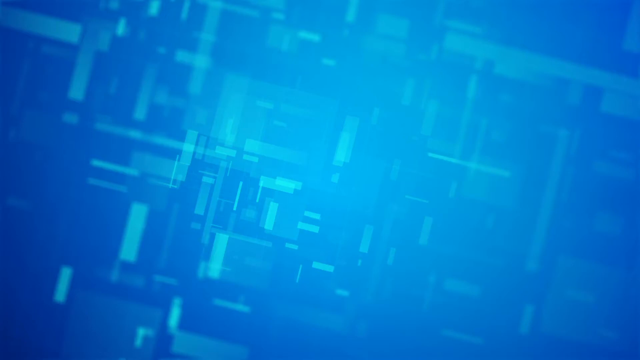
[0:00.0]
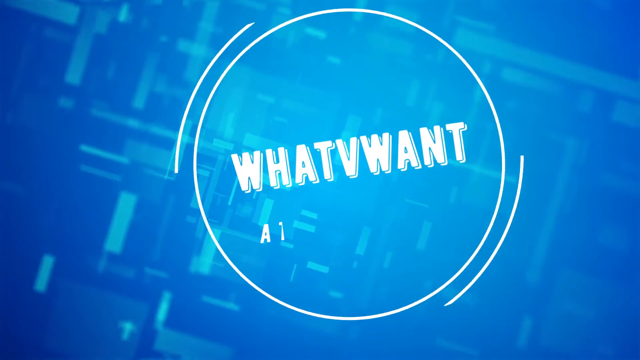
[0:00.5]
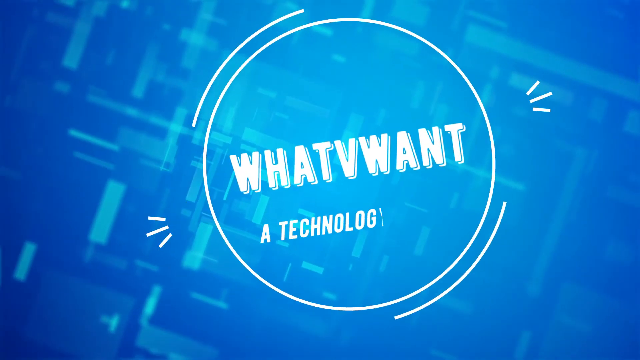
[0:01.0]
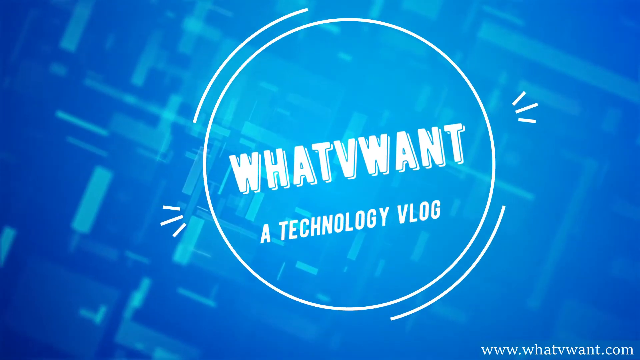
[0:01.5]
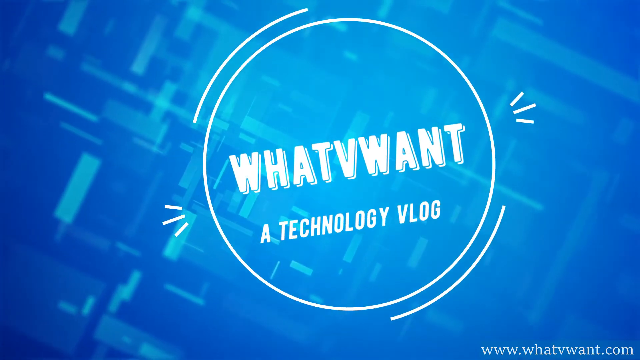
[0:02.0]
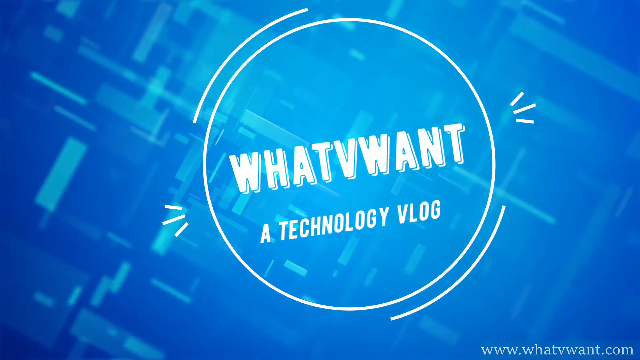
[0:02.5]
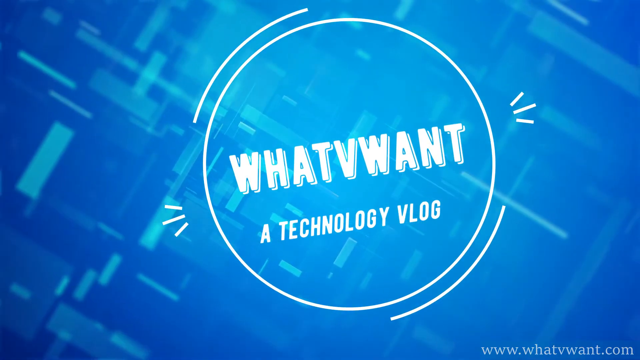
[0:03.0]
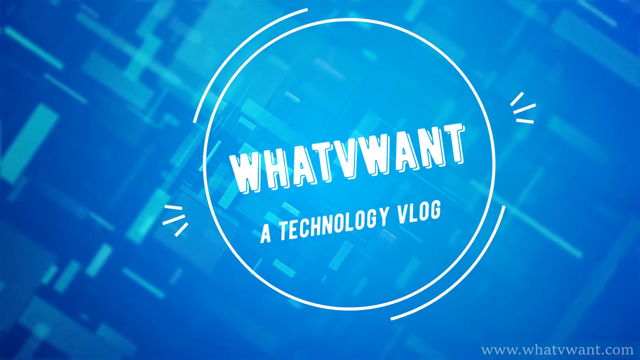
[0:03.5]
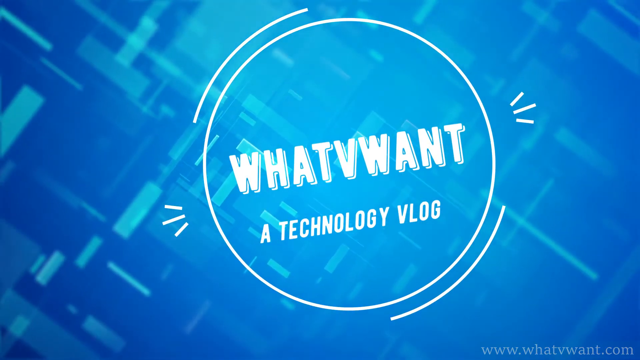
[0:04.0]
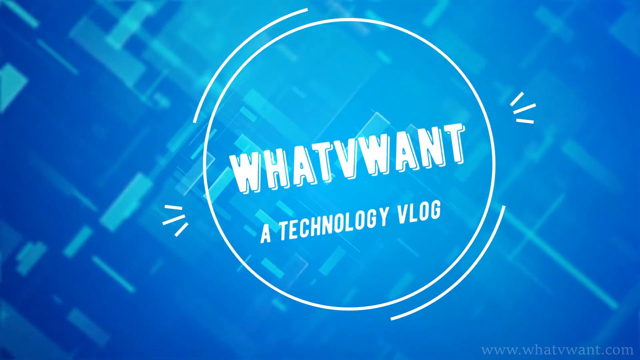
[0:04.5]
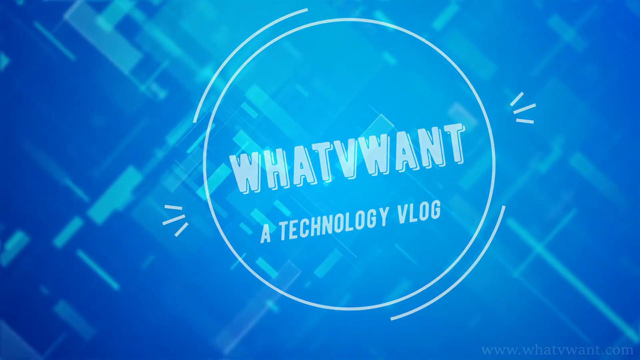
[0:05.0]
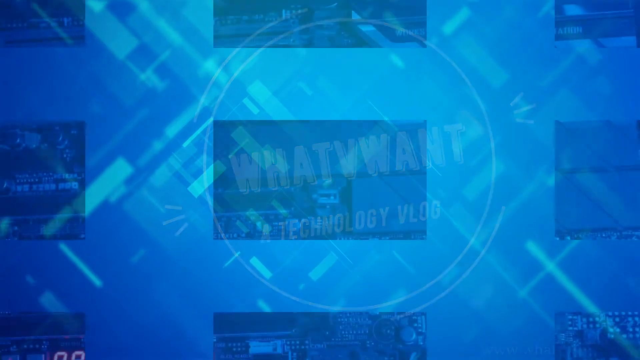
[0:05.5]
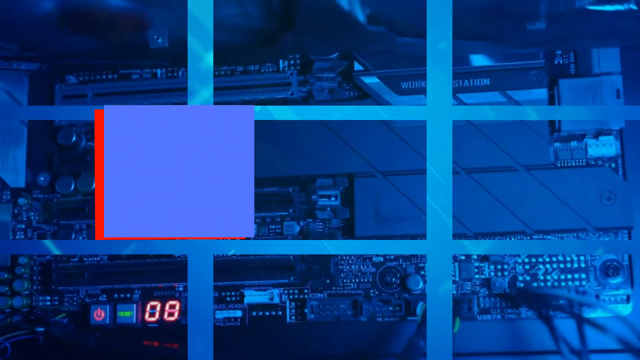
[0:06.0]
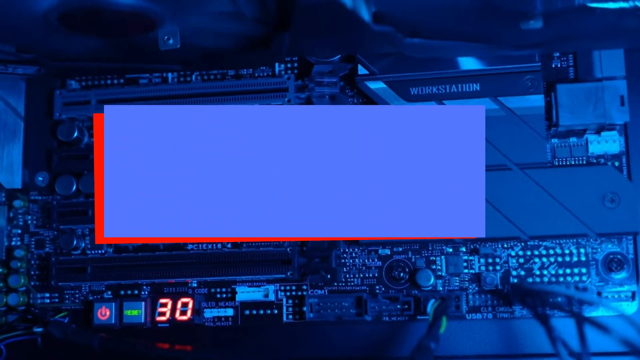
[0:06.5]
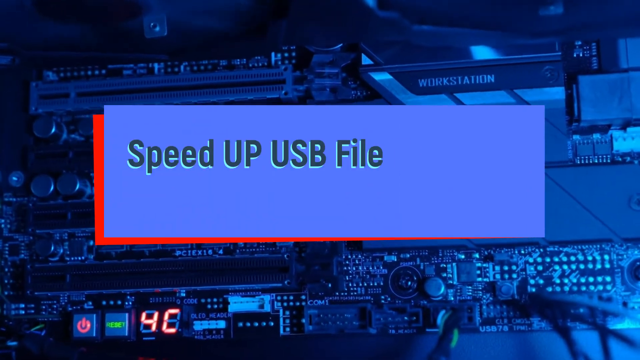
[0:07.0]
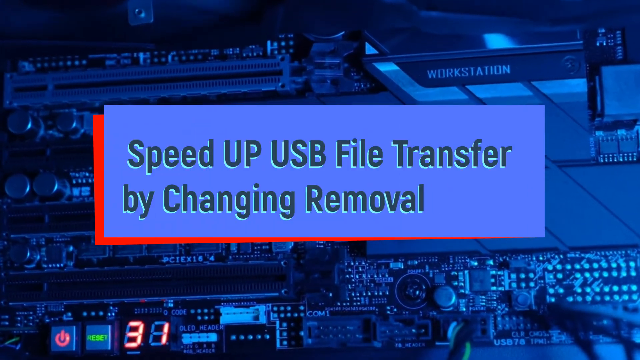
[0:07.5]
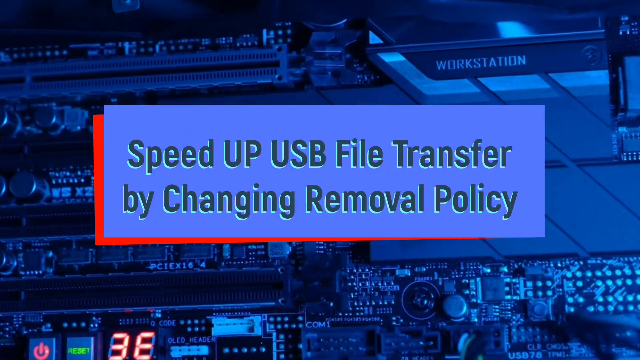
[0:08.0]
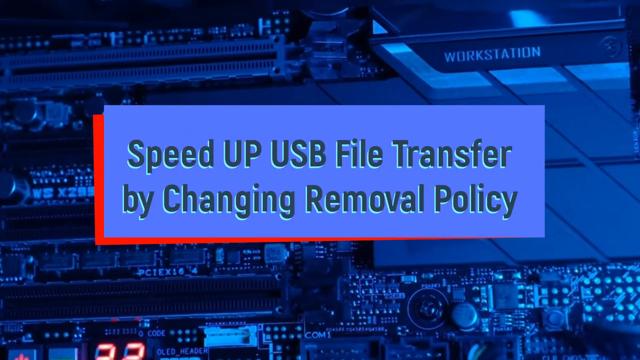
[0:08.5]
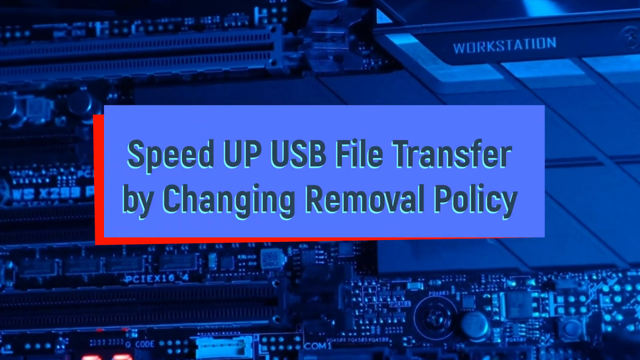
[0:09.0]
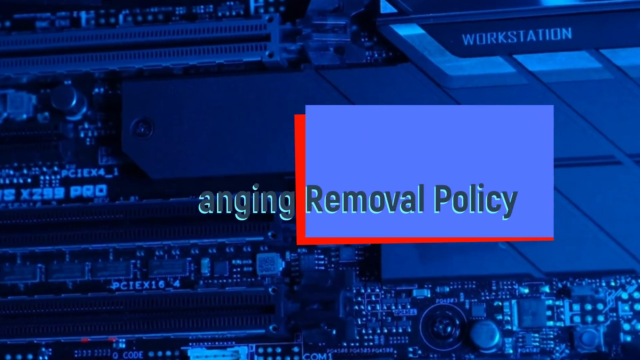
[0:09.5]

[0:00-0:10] A technology video opens on a blue background with the text "speed up USB file transfer." The video moves extremely fast. The blue background spins, and then some kind of computer appears along with the text "by changing removal policy." The website "www.whatyouwant.com" is shown. There is a purple square on top of a red square.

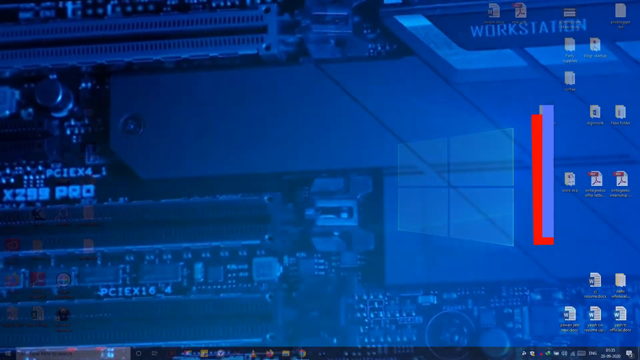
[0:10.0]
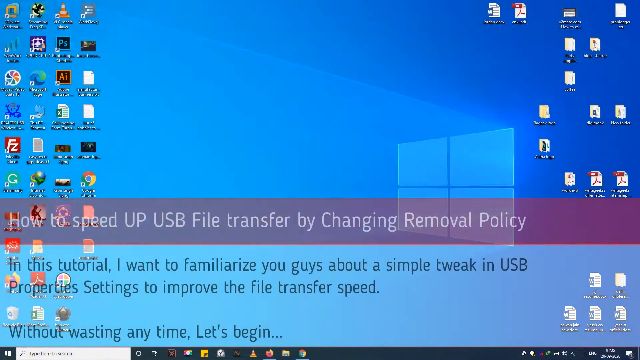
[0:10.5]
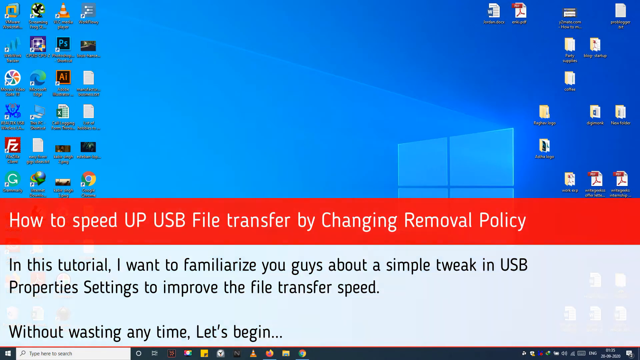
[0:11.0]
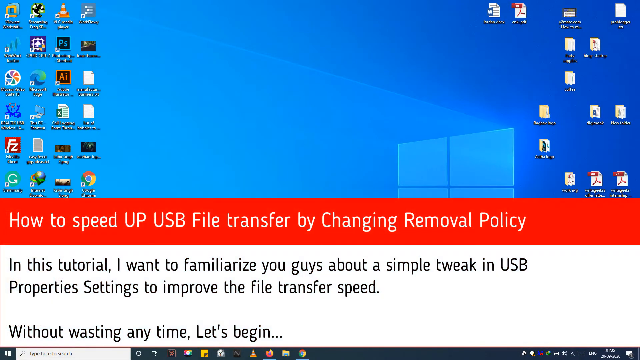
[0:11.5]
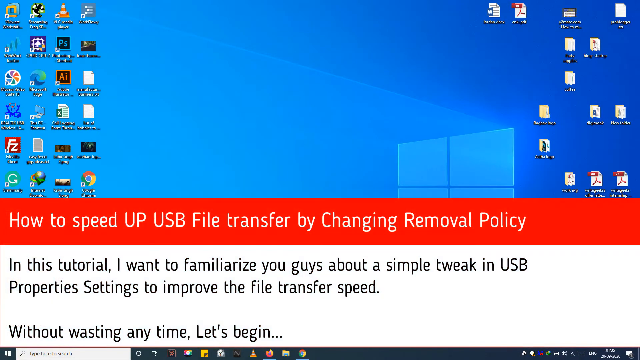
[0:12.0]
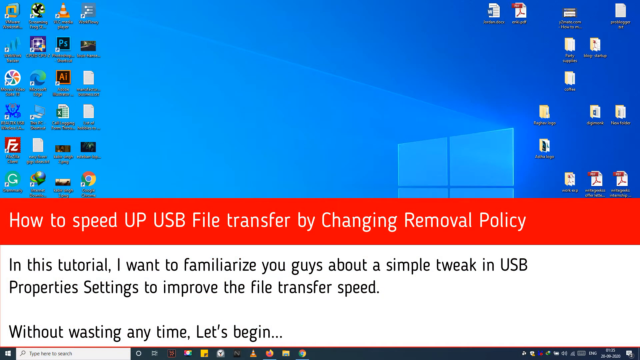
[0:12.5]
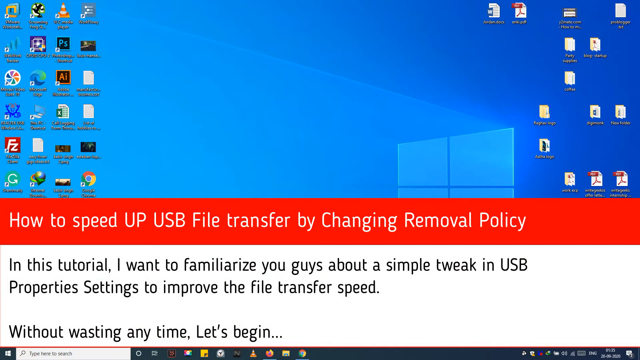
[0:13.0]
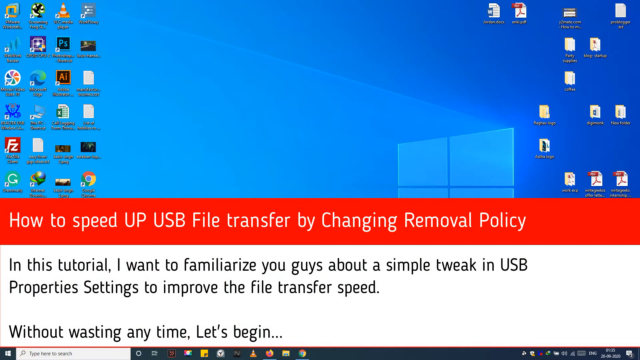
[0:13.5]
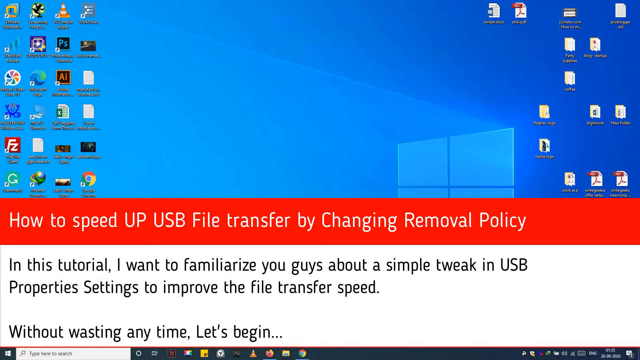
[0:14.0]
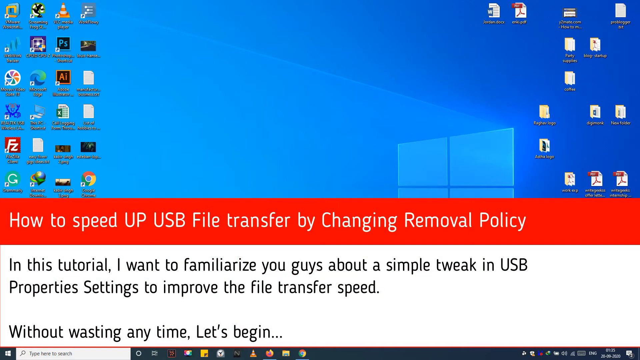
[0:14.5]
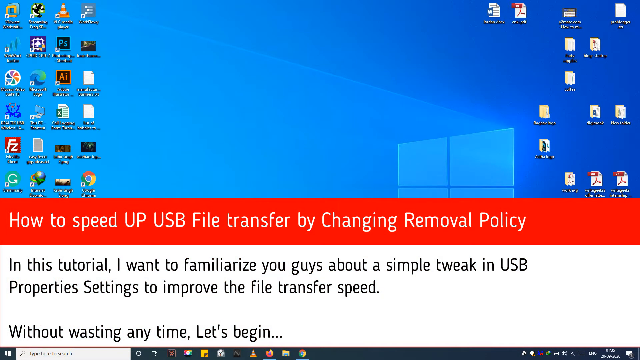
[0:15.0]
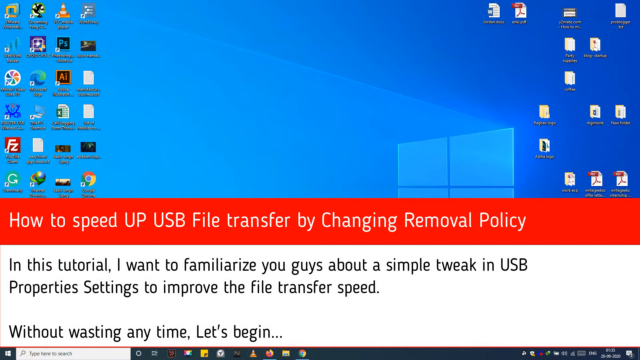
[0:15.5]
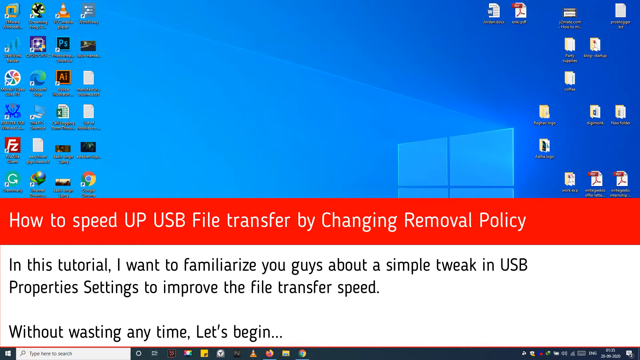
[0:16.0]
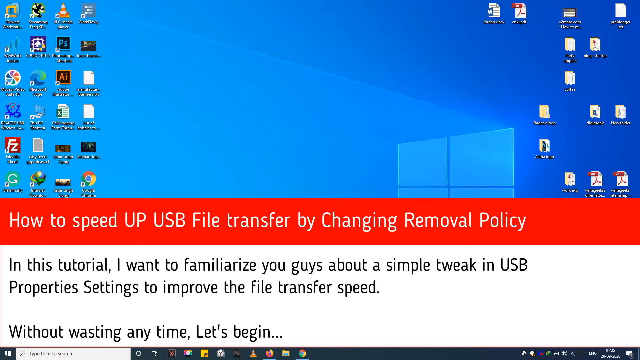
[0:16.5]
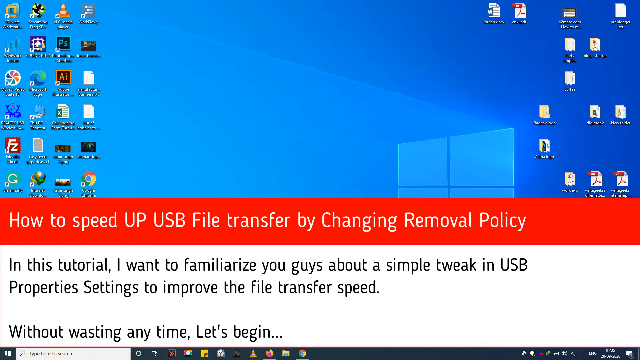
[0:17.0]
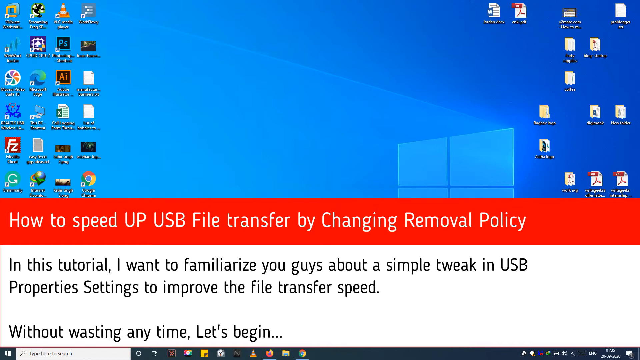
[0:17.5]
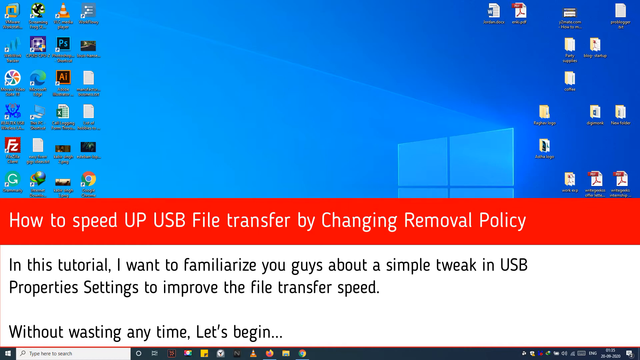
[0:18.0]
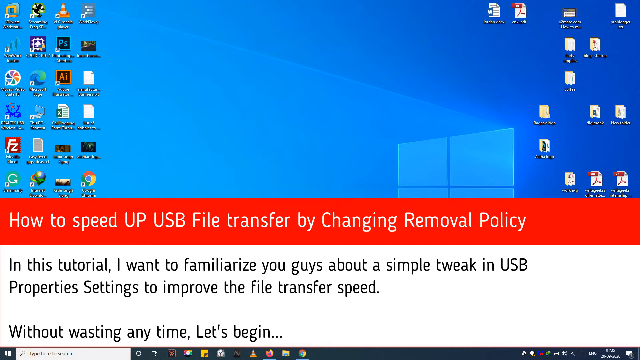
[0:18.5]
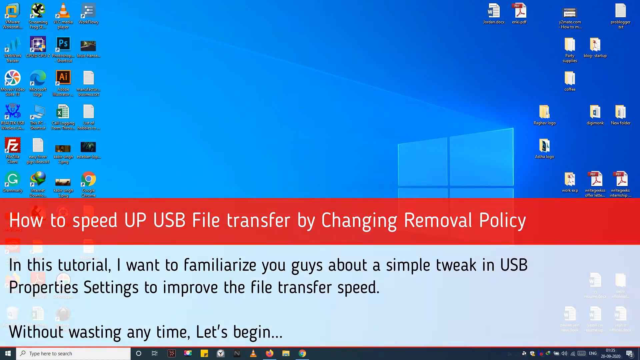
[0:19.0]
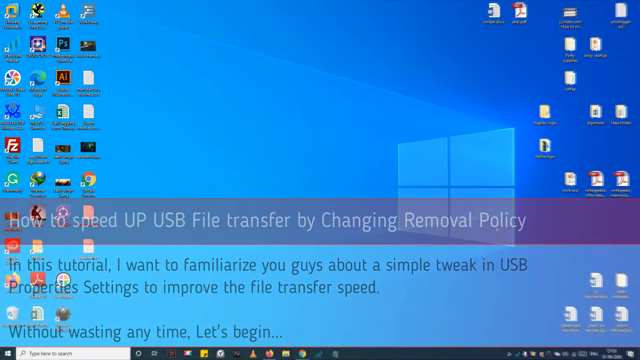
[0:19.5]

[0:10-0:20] Text reads "speed up USB file transfer by changing removal policy," followed by text about "a simple tweak in USB property settings to improve the file transfer speed" and "Without wasting any time, let's get going." The video then goes to a computer screen, which is shown in the background behind text placed in red and white sections. In the red section on the lower part of the screen the text is white, and in the white section the text is black. The text does not quite reach halfway up the screen.